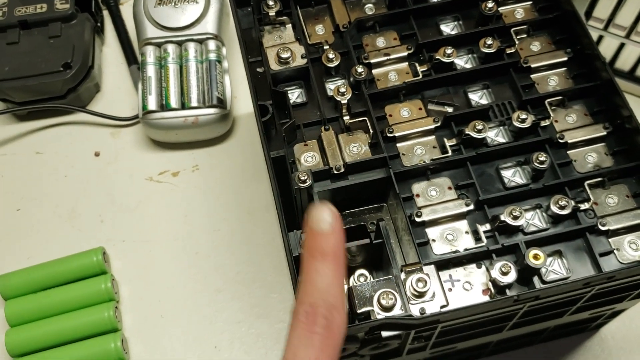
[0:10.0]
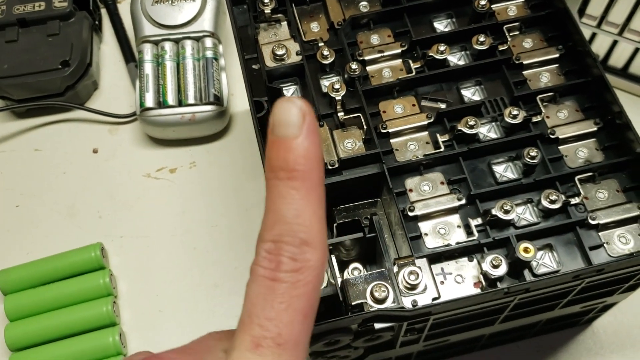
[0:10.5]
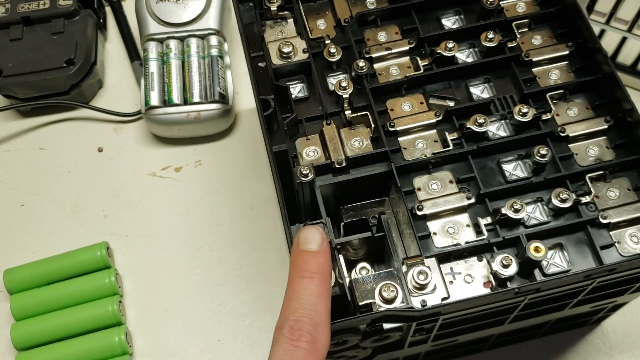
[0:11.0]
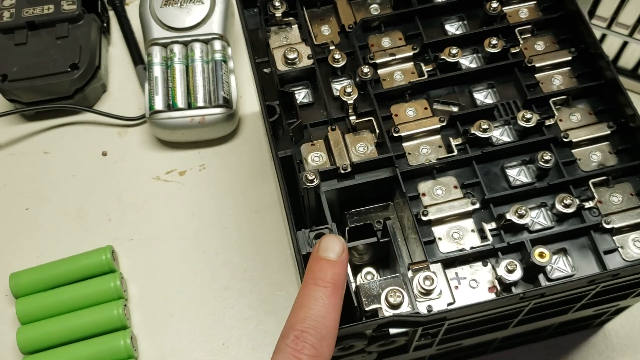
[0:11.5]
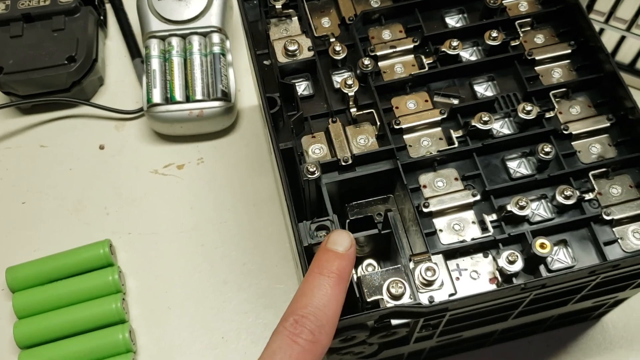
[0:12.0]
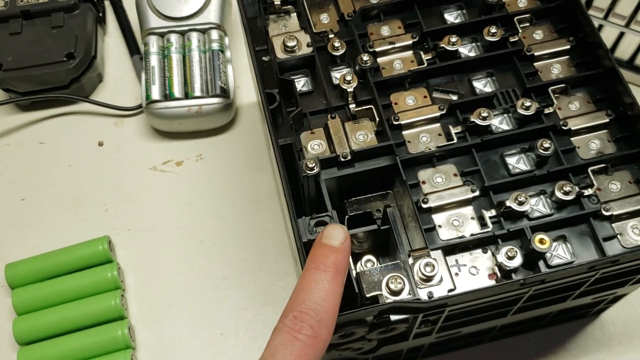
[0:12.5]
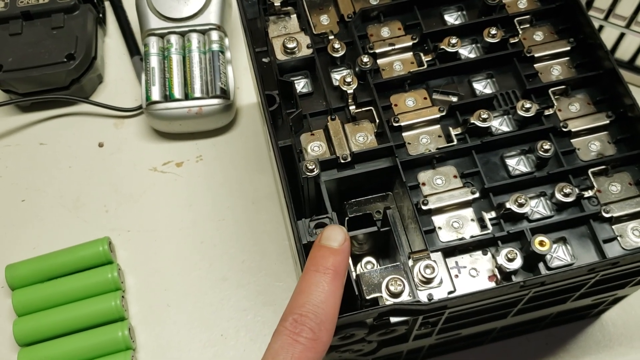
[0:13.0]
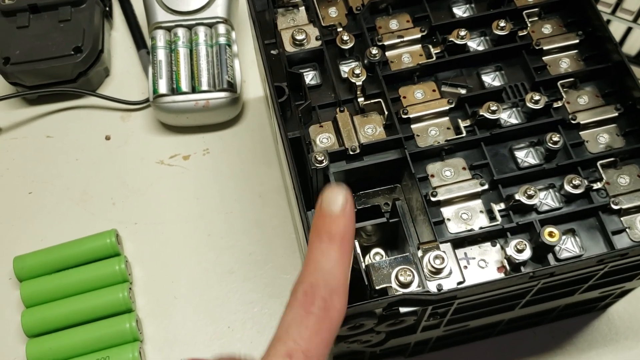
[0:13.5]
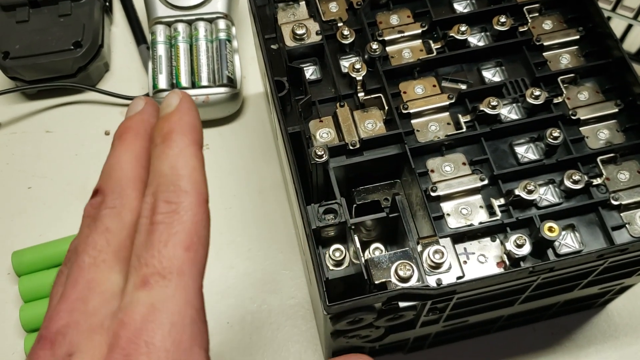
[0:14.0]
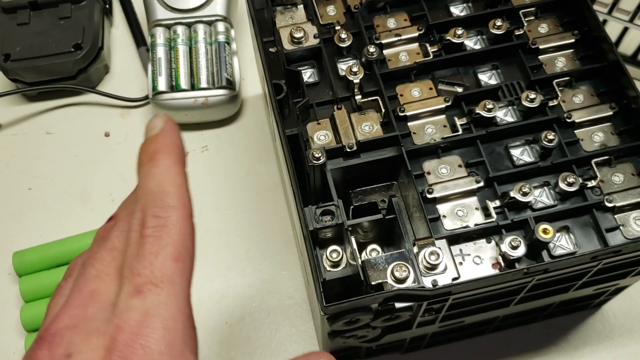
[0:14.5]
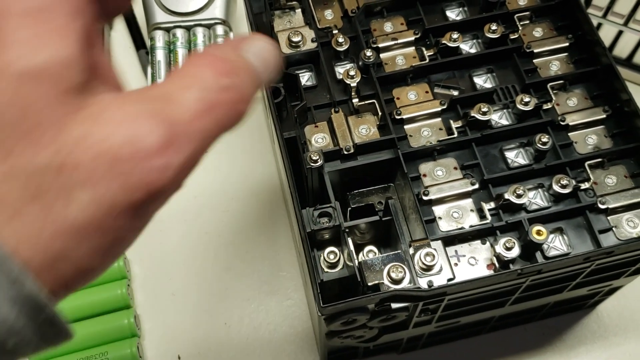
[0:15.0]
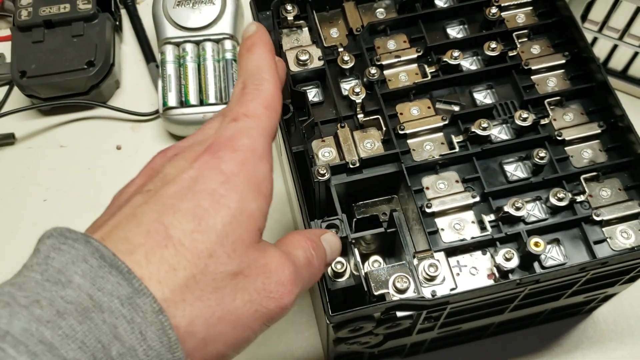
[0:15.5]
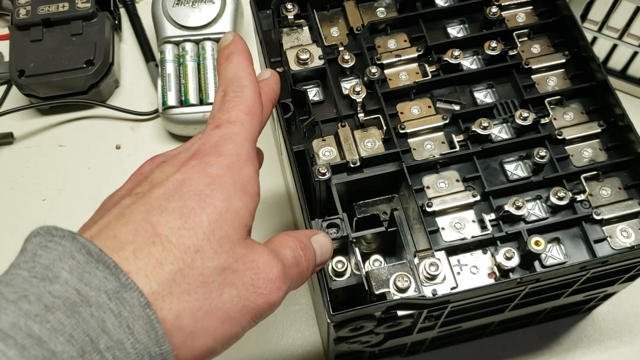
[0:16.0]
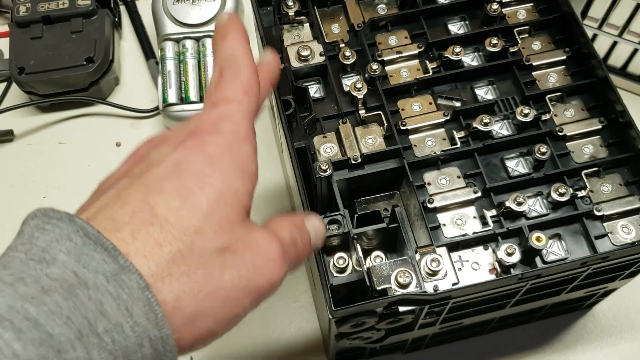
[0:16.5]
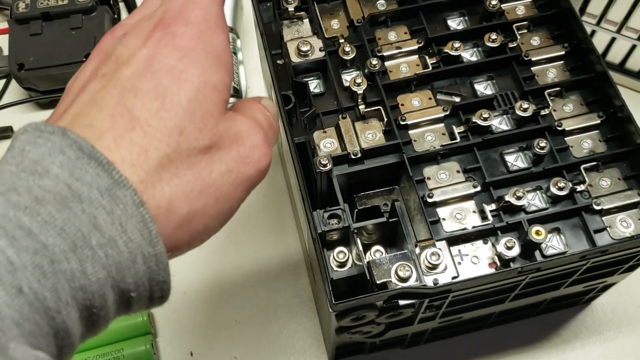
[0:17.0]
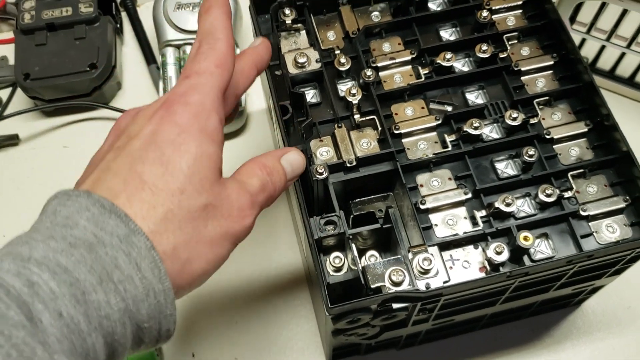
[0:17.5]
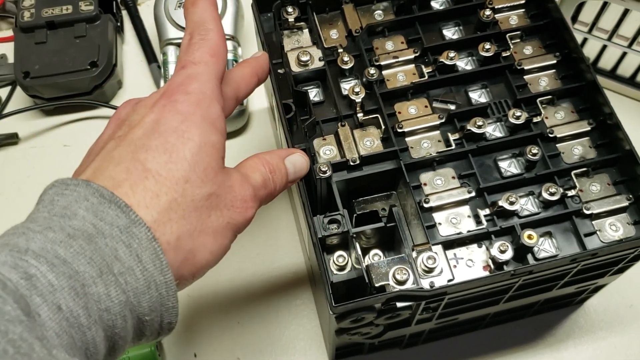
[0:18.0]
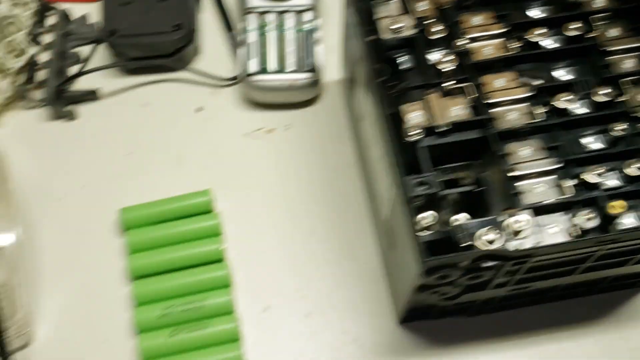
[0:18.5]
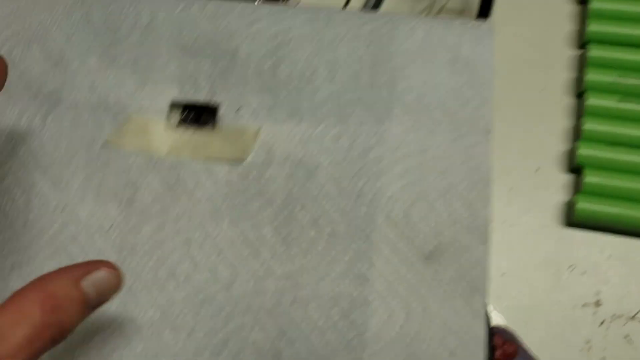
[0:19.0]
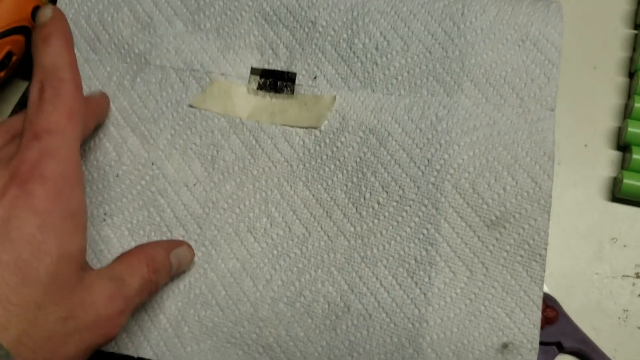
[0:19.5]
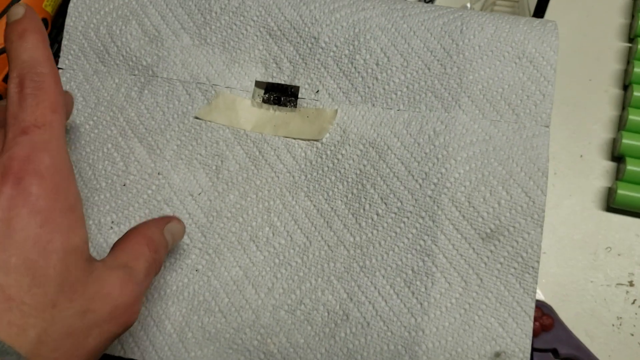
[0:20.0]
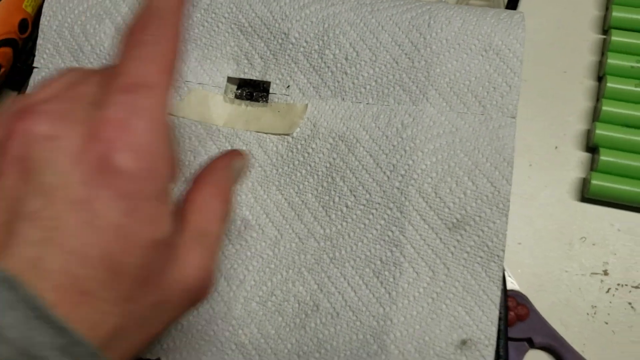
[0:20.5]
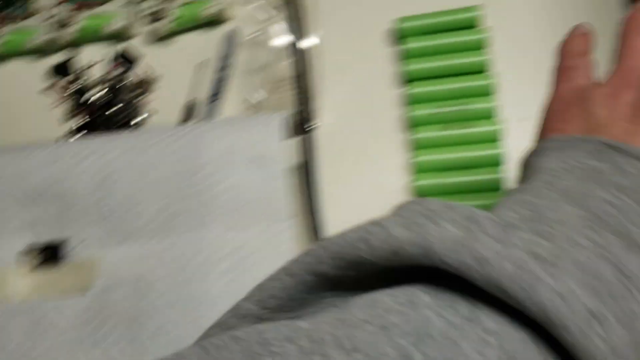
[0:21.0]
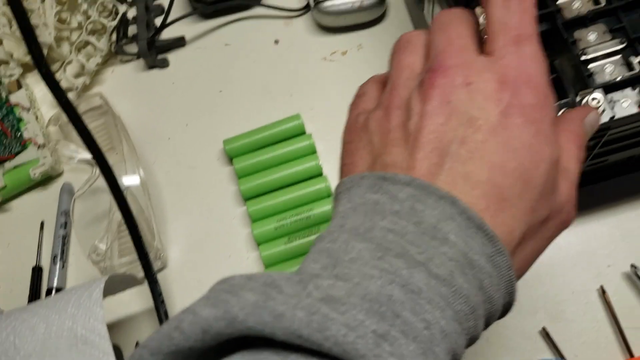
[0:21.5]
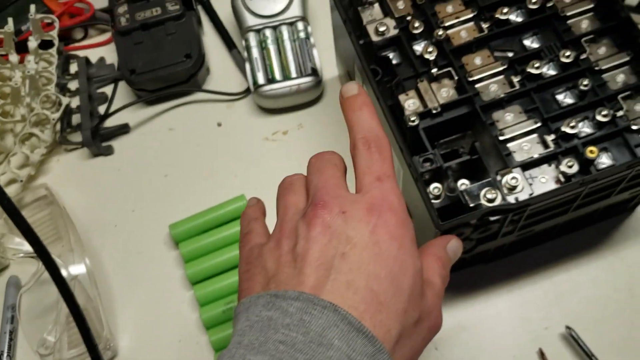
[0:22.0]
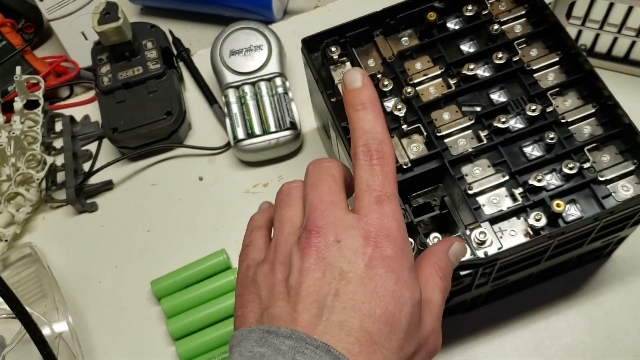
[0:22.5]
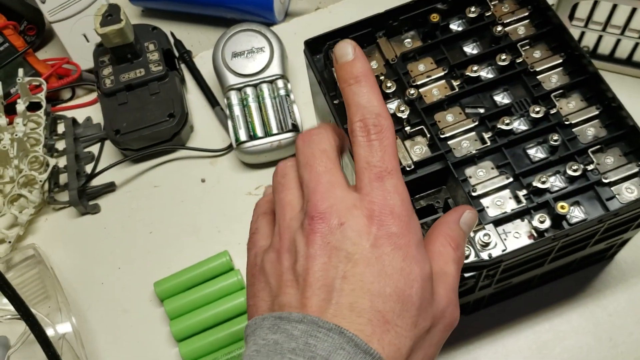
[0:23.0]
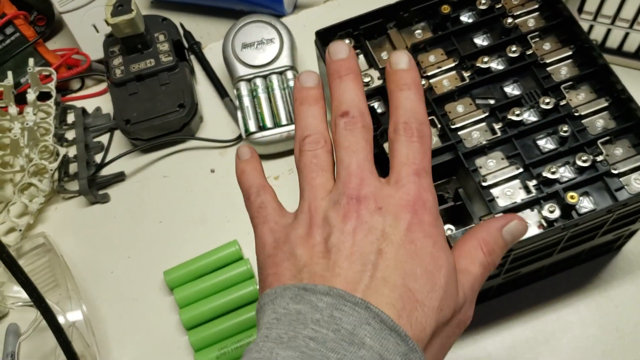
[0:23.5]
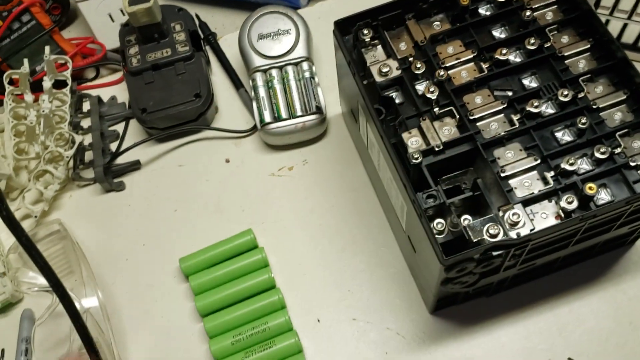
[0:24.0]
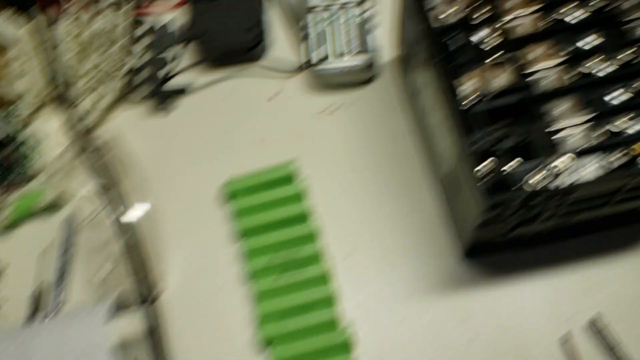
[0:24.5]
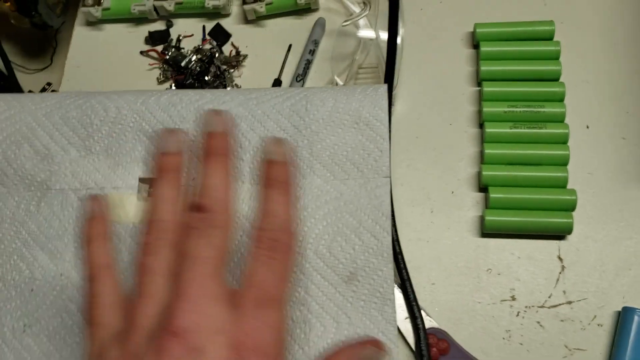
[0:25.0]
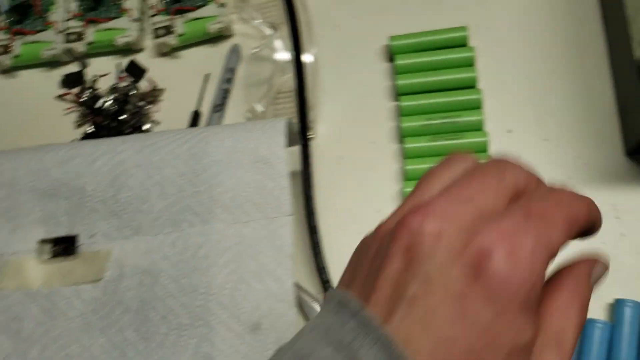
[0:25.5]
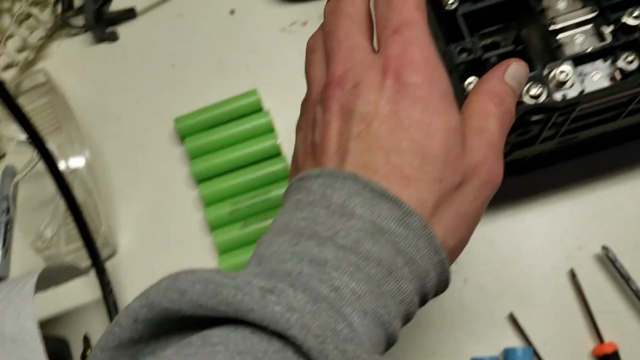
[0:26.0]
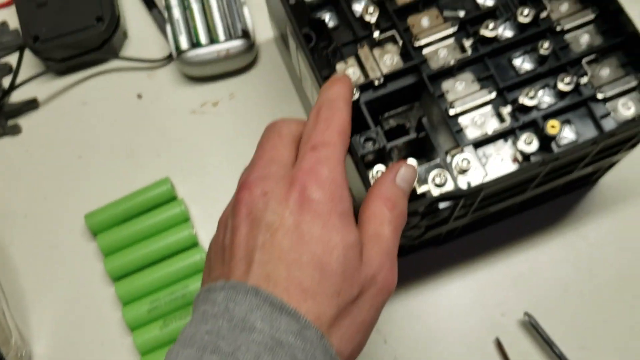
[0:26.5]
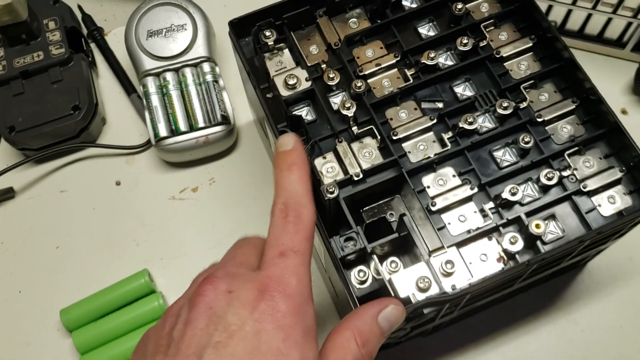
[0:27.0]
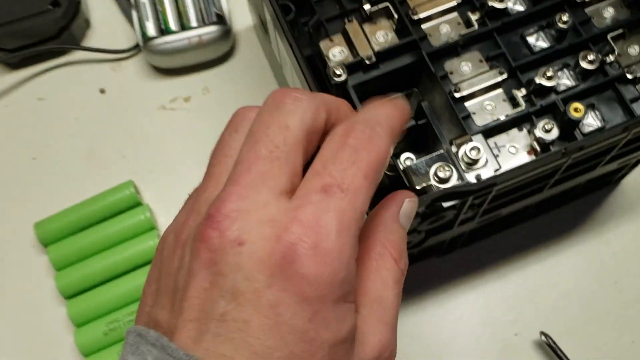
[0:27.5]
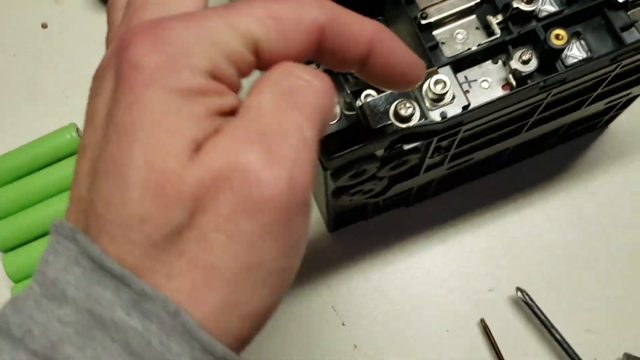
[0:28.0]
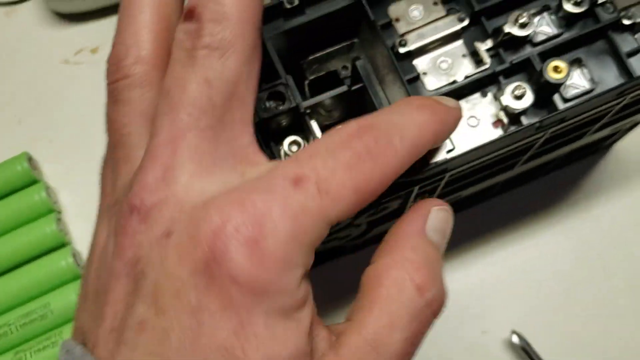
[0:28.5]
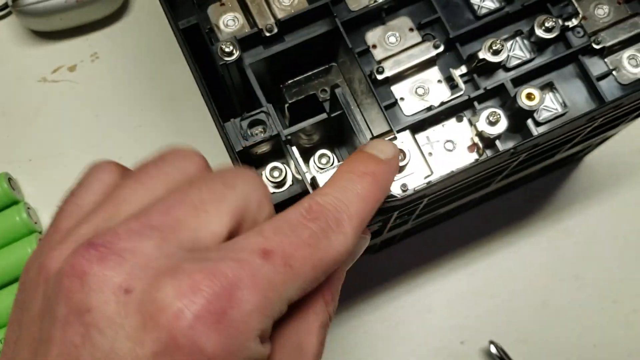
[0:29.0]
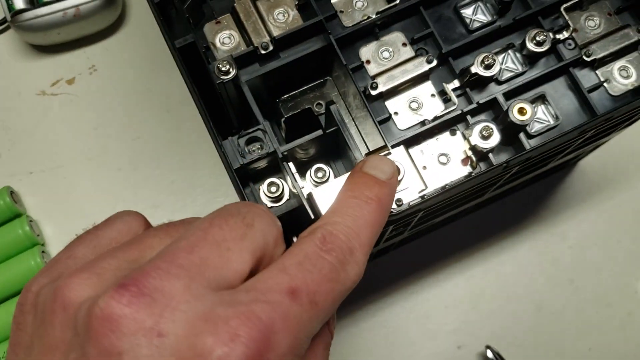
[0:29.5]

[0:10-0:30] The person points at the item and appears to be talking; they look like they are white. They move on from the electrical item to other things, including what looks like more batteries, perhaps waiting to be recharged, and seem to point between two or three different items on the table. They move across to something that looks like it is covered with paper that is taped shut. The person touches the metal parts of the electrical item.